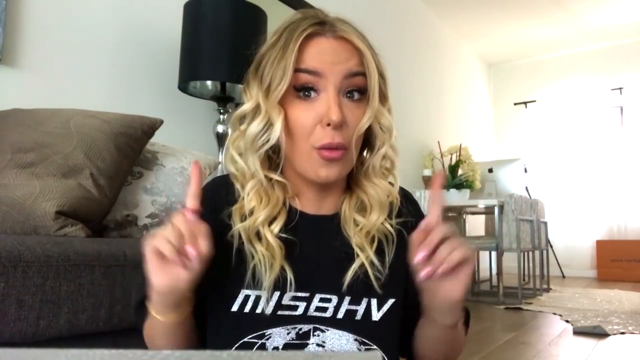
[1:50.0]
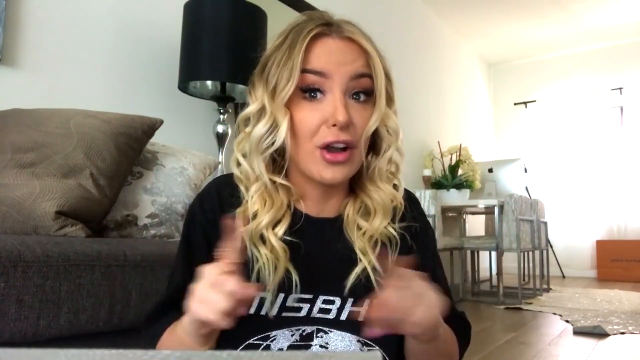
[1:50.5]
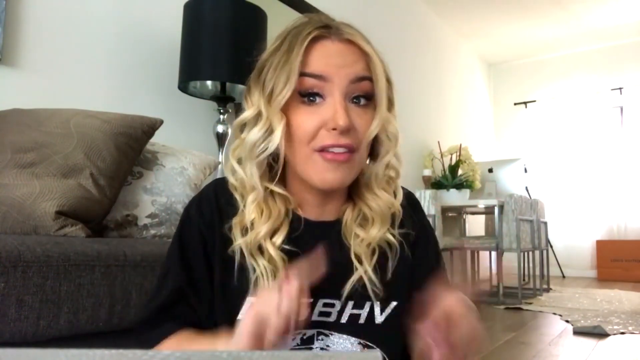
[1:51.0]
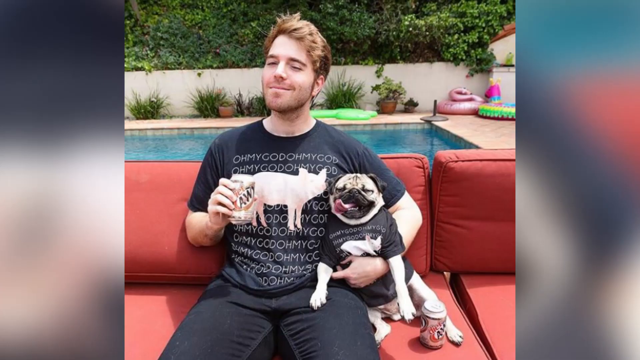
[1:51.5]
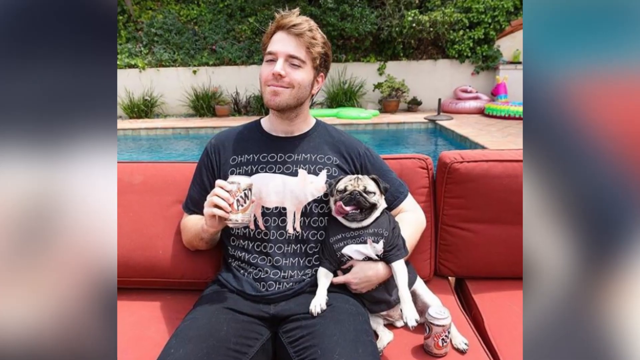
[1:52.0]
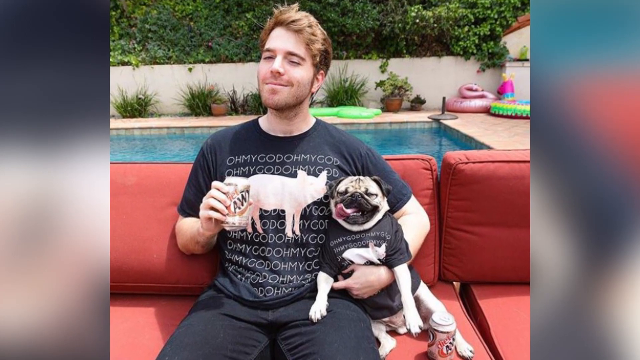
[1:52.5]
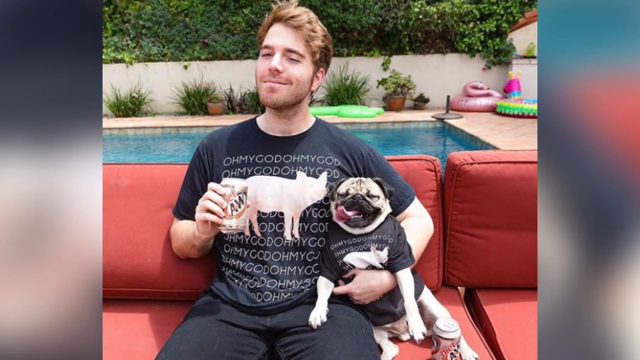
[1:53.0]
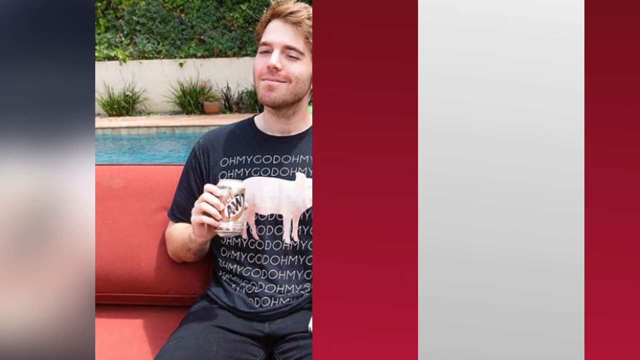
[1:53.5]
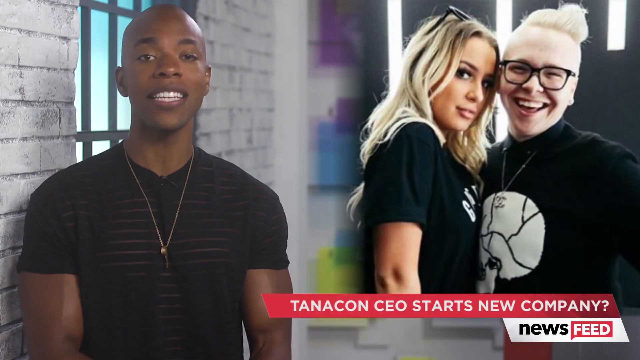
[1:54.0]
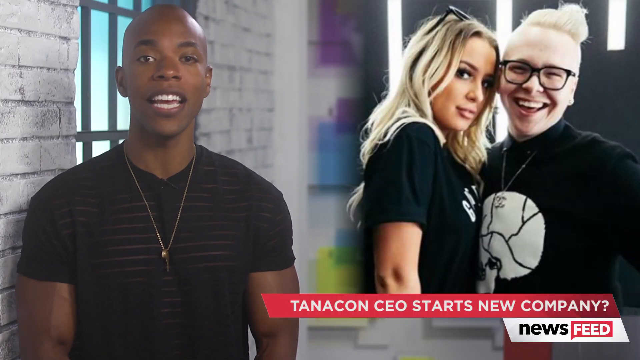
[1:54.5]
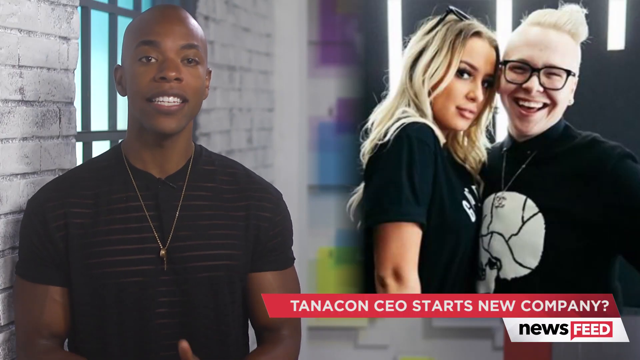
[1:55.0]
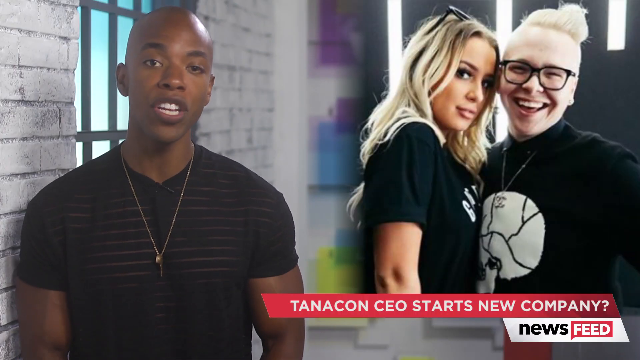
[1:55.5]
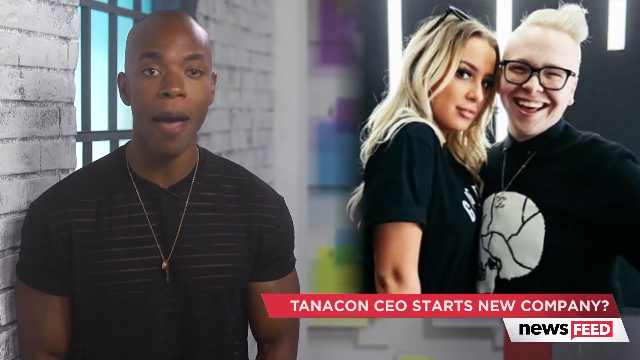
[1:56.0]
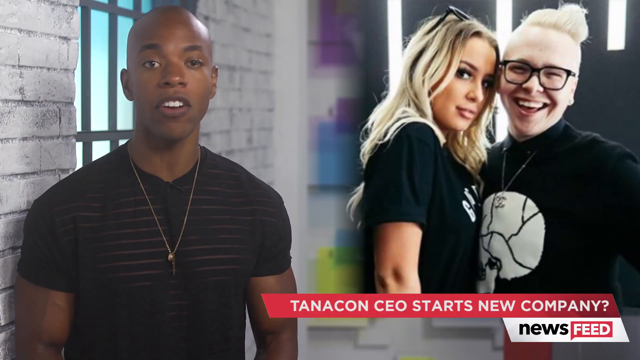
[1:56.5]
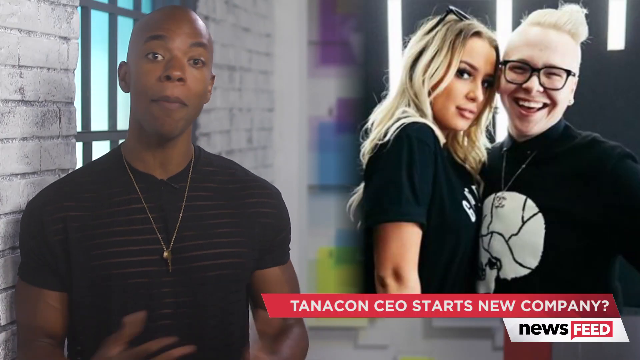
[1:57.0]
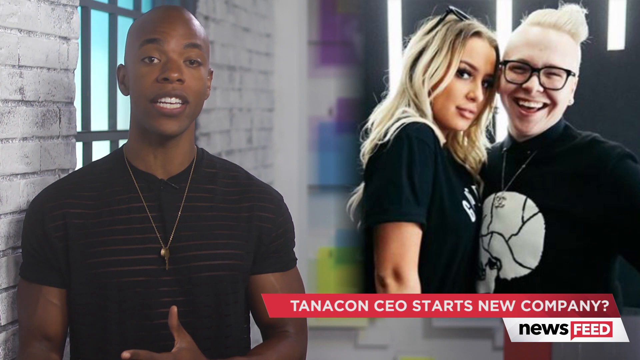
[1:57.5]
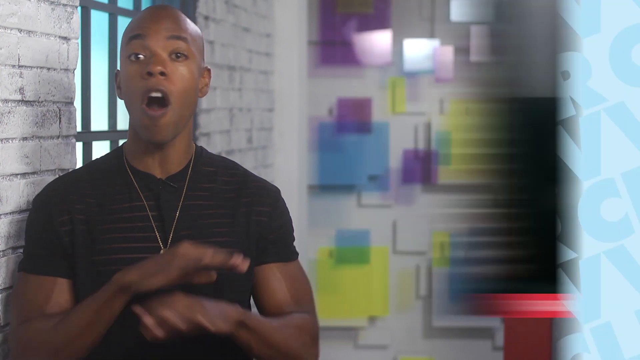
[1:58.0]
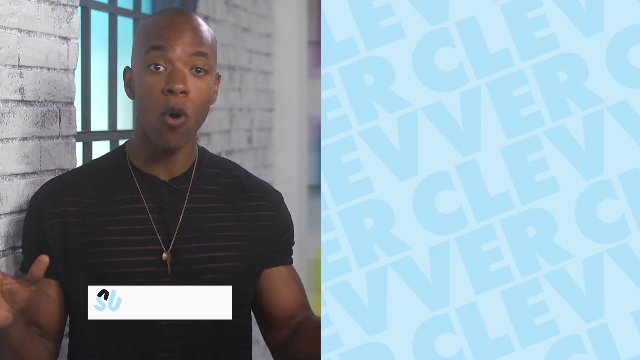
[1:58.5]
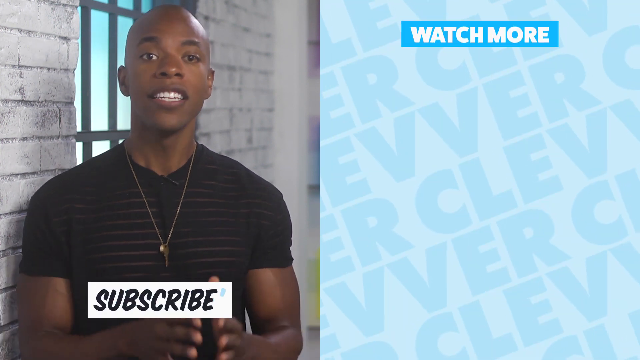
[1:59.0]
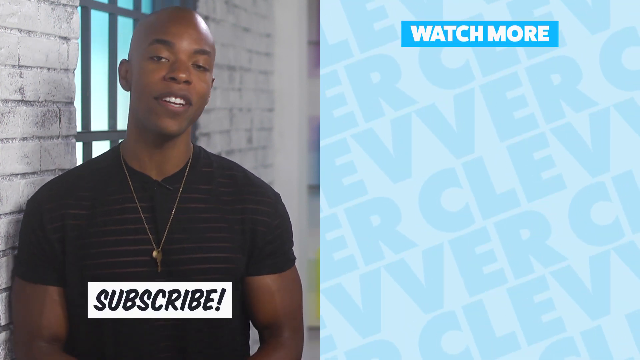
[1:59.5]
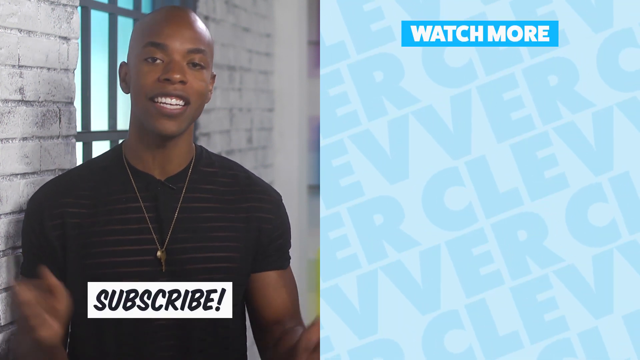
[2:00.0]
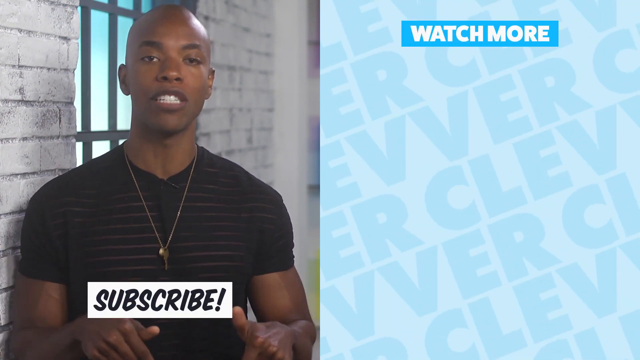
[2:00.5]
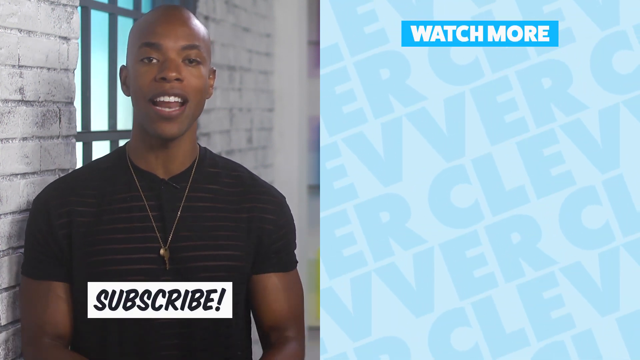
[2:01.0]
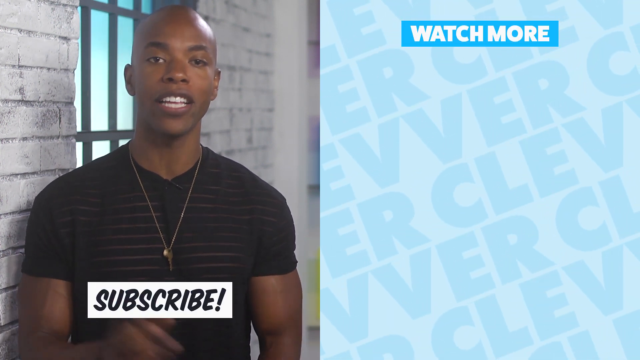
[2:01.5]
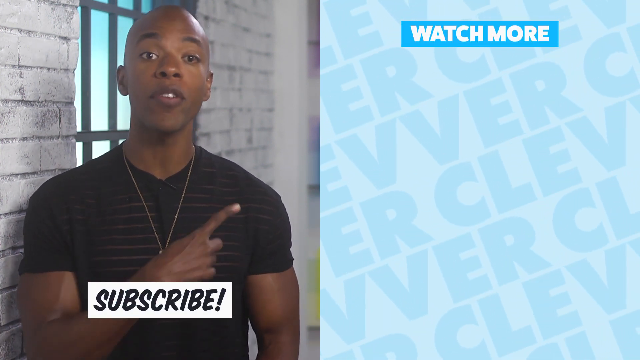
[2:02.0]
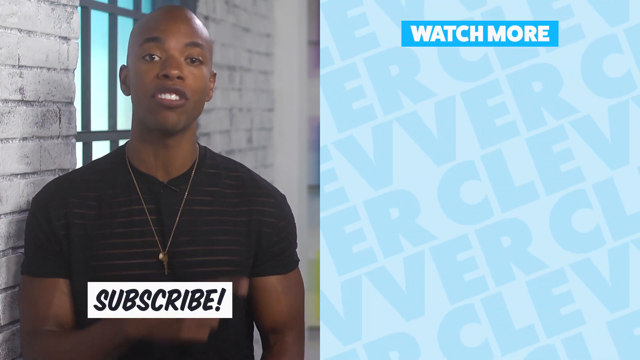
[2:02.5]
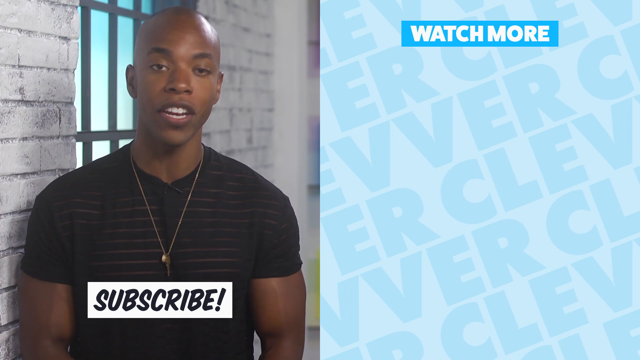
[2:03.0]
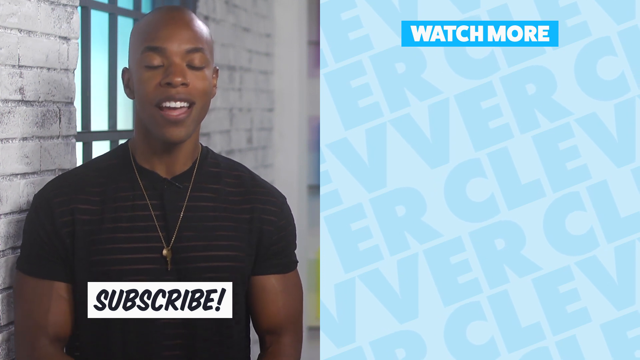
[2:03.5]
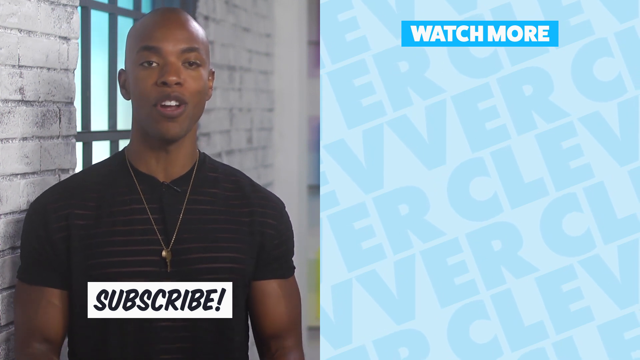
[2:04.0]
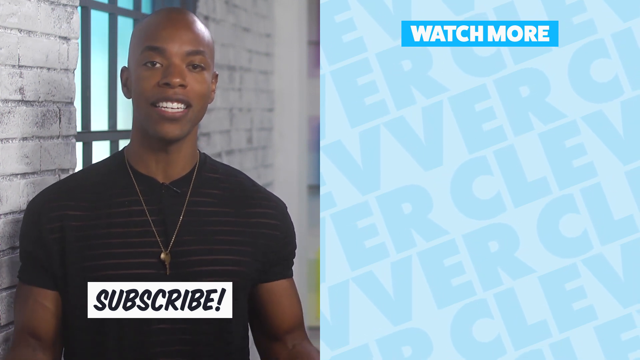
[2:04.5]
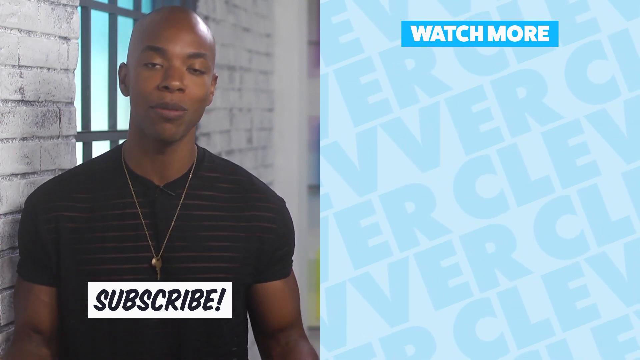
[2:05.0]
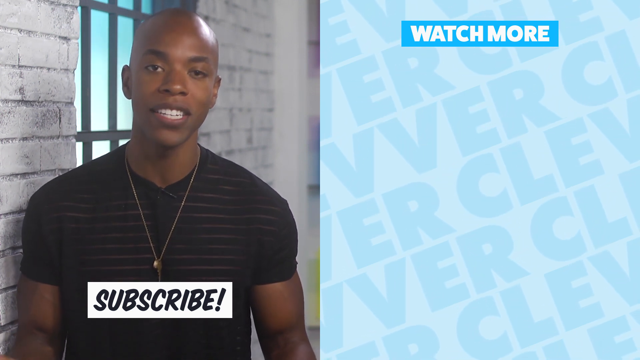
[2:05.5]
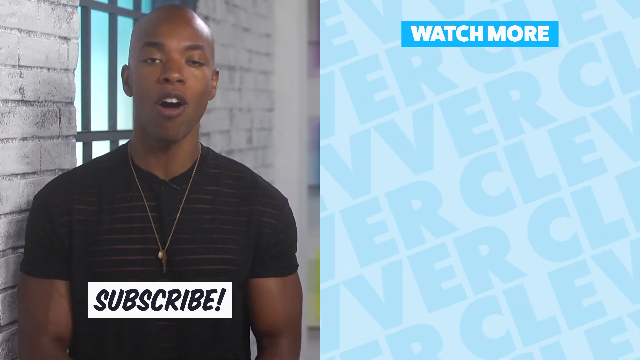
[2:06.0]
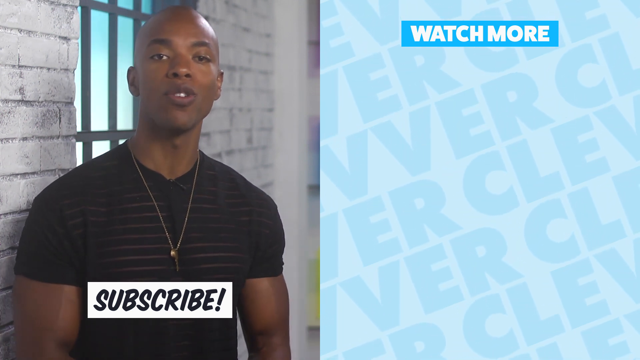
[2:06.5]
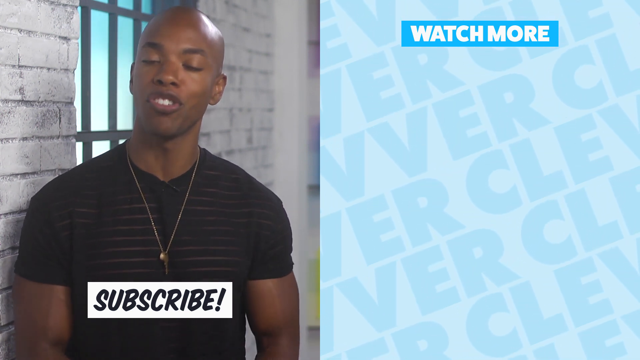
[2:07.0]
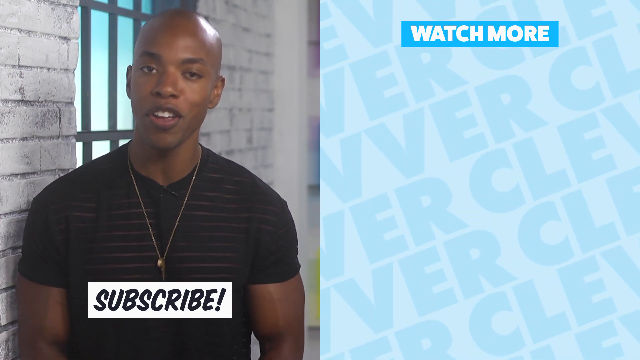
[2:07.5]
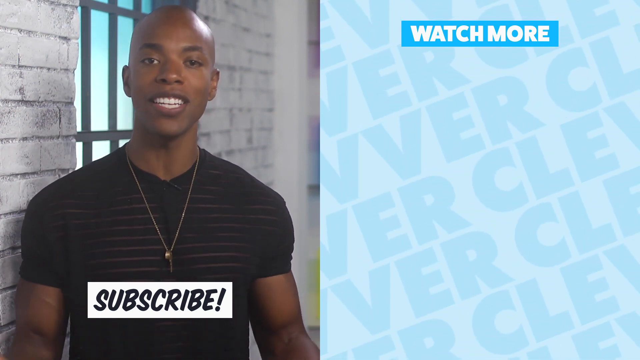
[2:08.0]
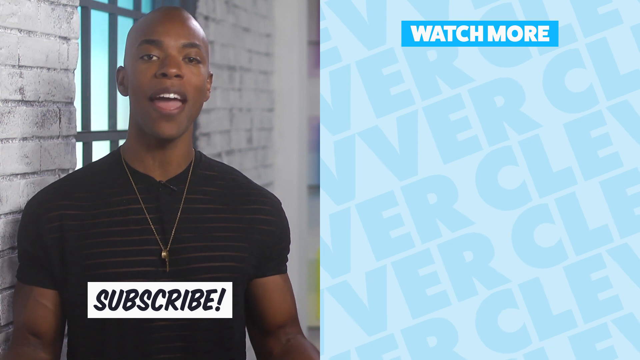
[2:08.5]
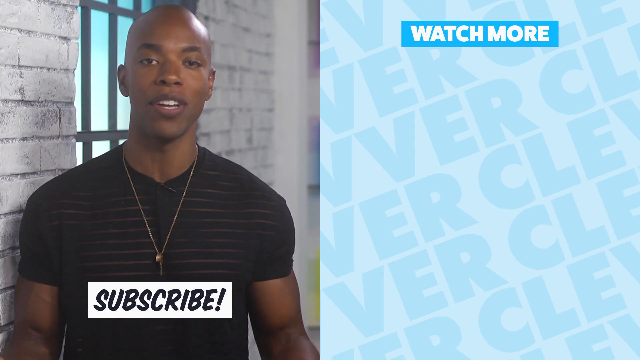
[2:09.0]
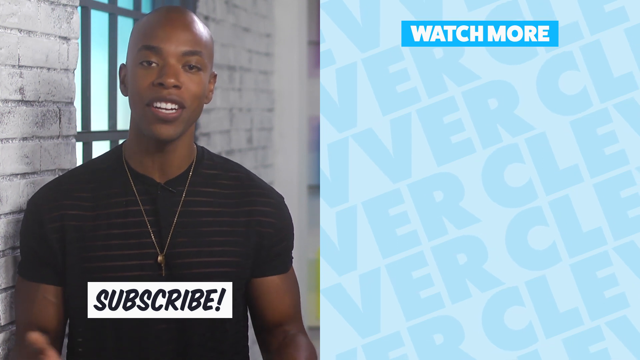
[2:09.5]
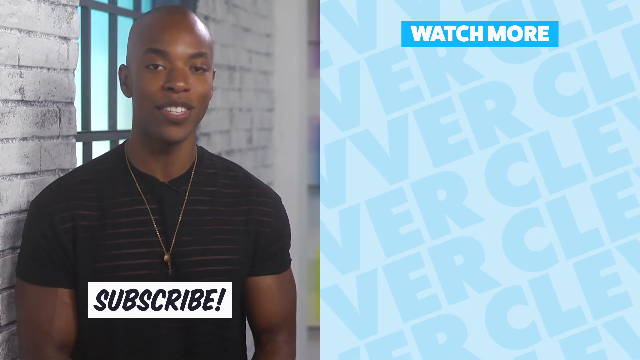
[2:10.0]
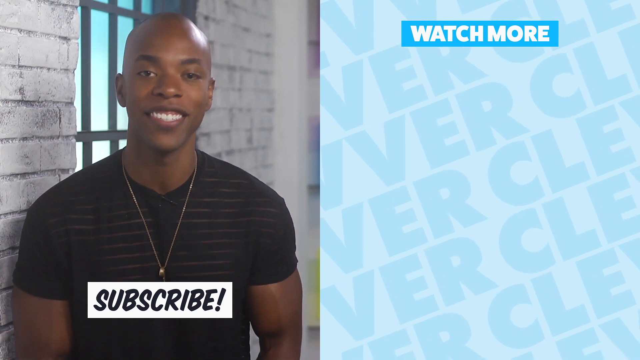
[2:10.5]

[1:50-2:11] After a brief view of the woman sitting on the ground, the video switches to a Caucasian man with brown hair and a little shadow of beard and mustache, sitting on a red couch poolside. He holds a bulldog wearing a black short-sleeve t-shirt that matches his own; the shirt has white text in the background and a pig on the chest area. In his right hand he holds an A&W root beer can. The camera pans in close on him. The video then returns to the graphic of the mohawked man cuddled up with the blonde woman, with the commentator still talking on the left. The pair on the right disappear, and beneath the commentator a white button pops up reading "subscribe" in black capitals. In the upper right, a blue text box says "watch more" in white capitals. Then comes moving angled text on a very light blue background: the large, bold word "clevver," spelled with two Vs, repeated over and over in about six diagonal lines, each line moving in the opposite direction to the next.